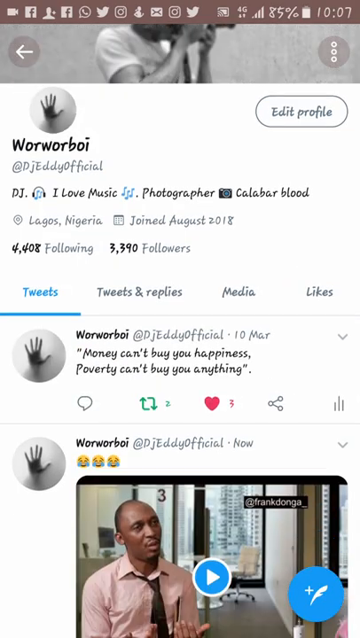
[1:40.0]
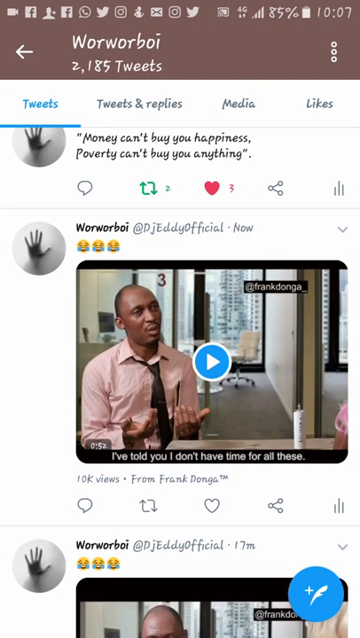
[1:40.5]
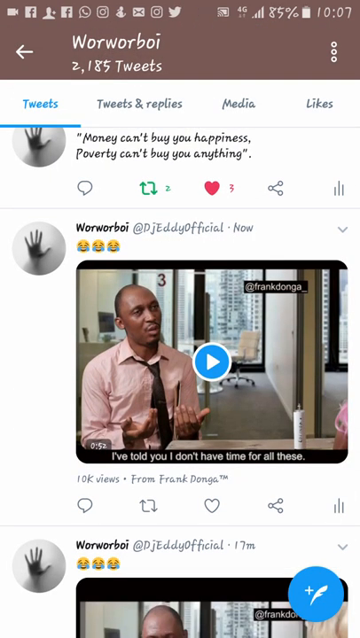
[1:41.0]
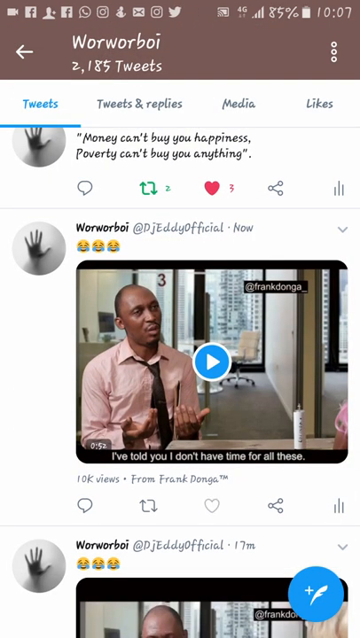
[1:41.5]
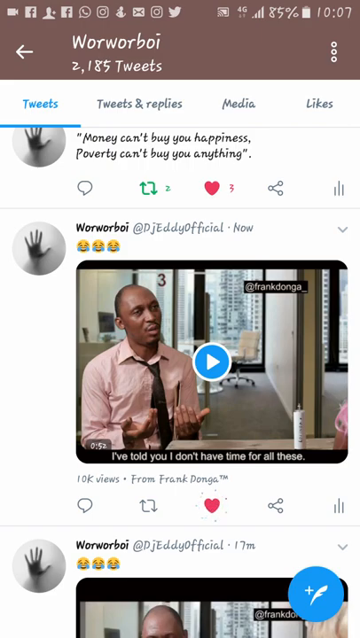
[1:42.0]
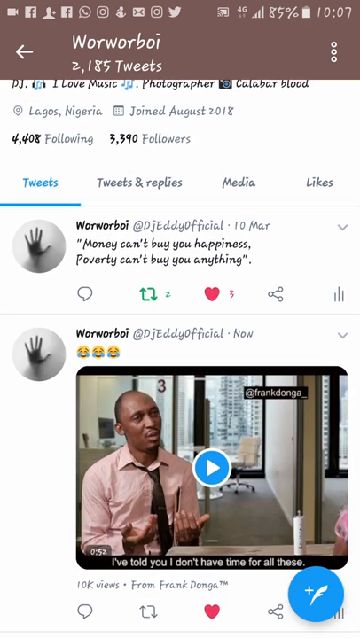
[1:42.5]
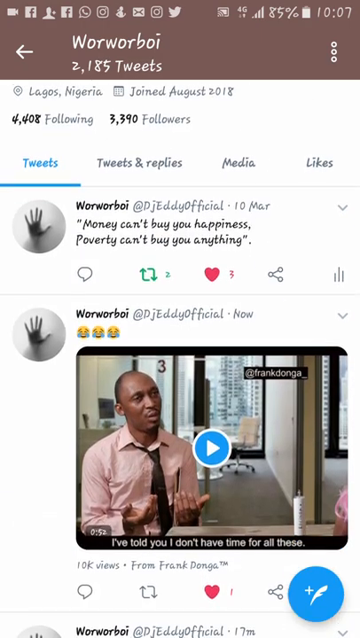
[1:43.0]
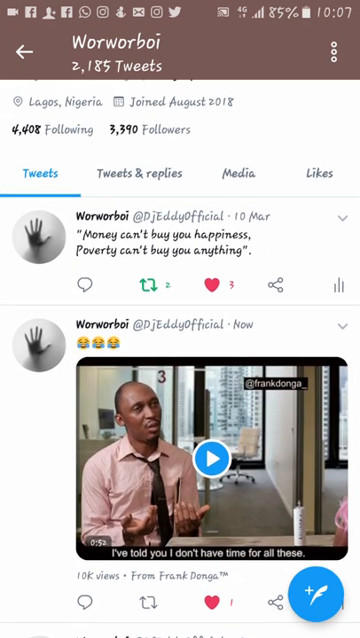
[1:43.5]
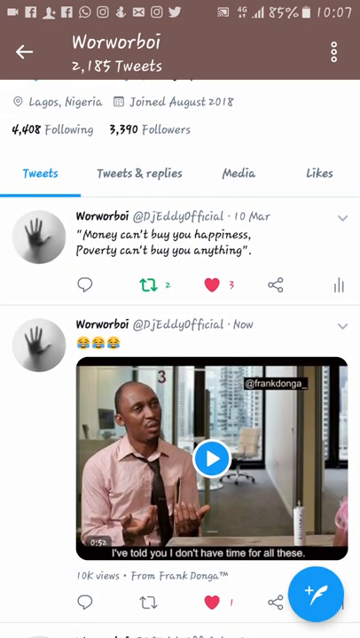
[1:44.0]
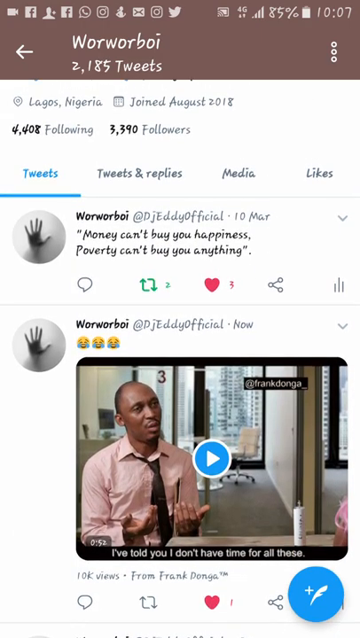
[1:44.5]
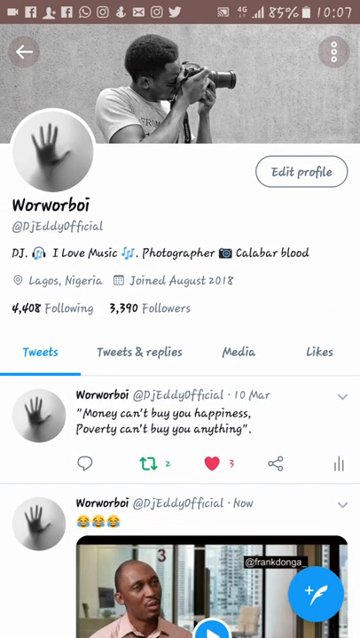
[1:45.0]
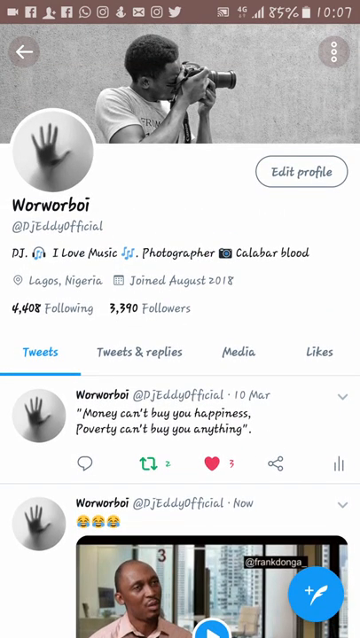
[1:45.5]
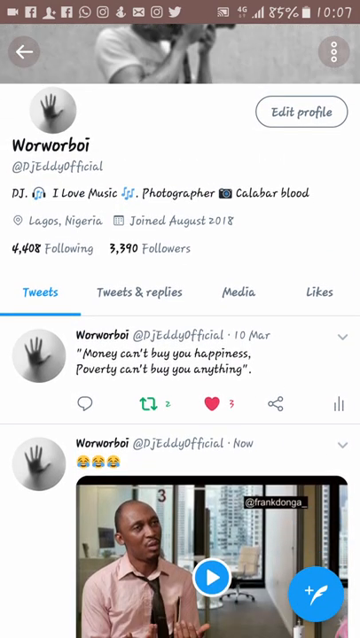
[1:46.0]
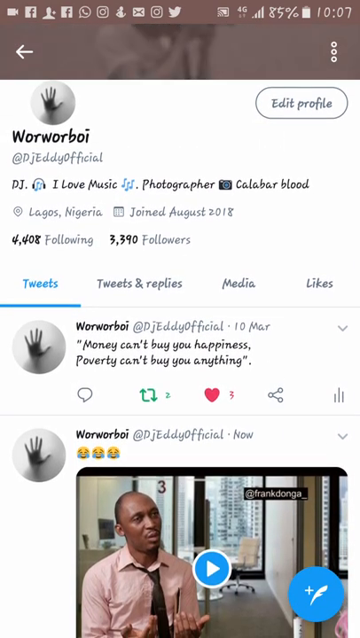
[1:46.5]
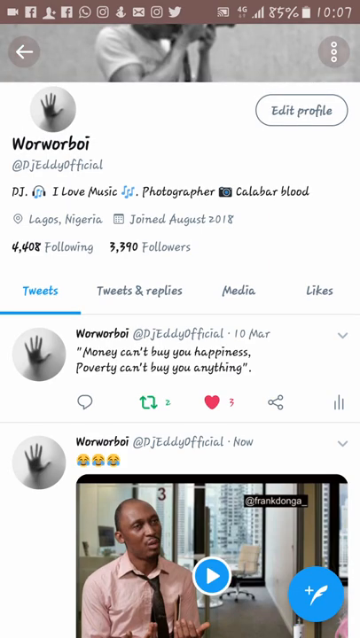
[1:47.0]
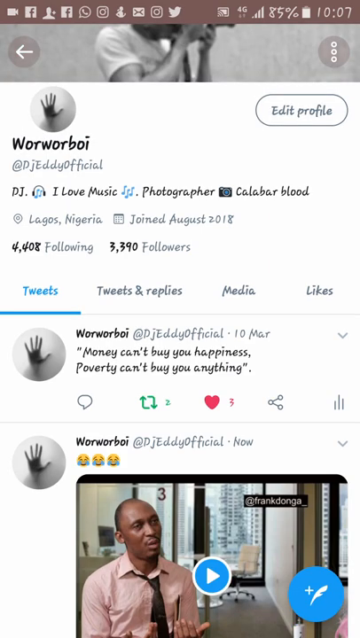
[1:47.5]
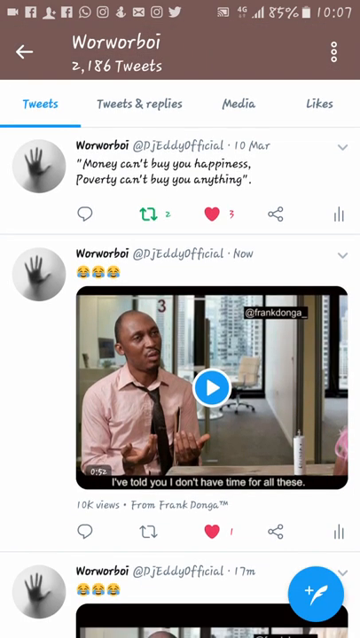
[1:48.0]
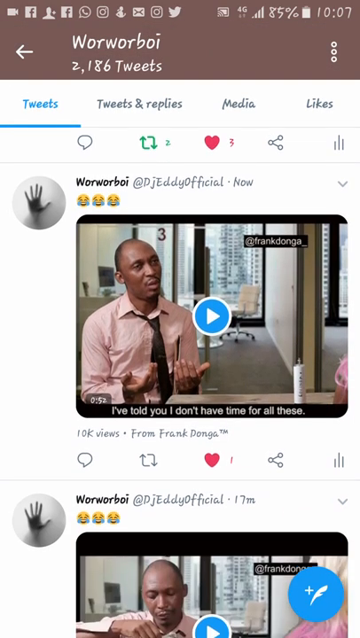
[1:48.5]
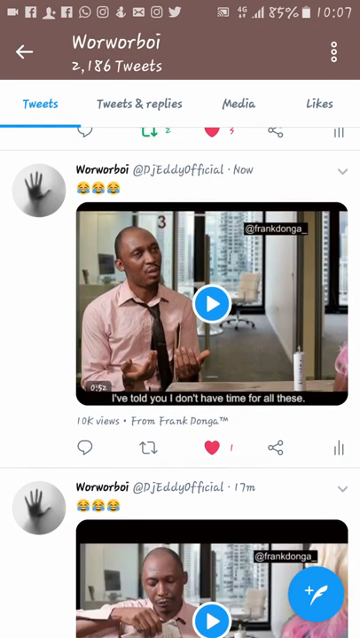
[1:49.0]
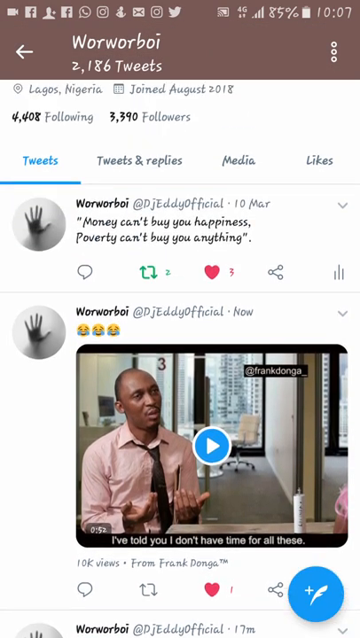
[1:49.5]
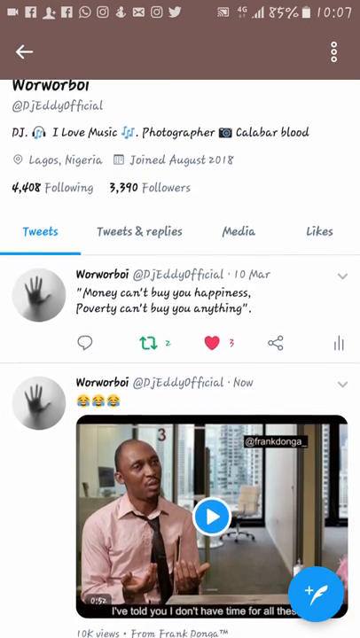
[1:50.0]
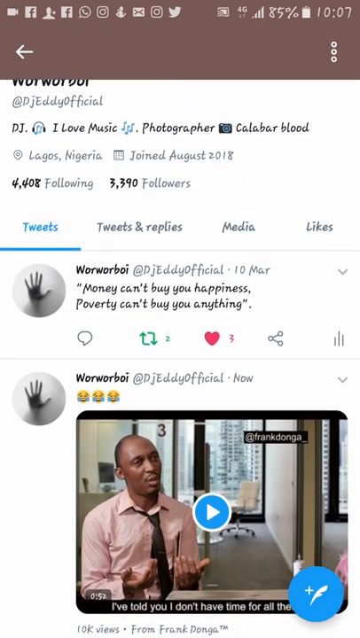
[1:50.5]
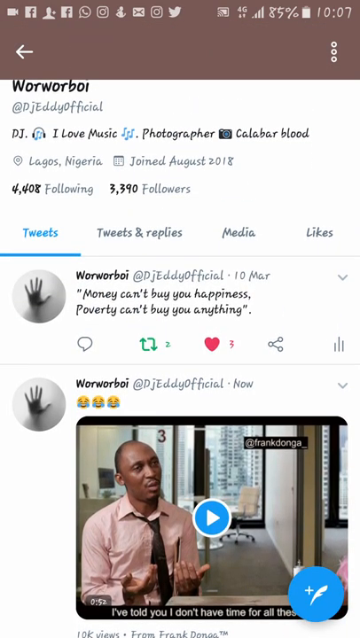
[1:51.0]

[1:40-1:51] The previously copied link is shown. The boy writes a caption on his post under his own thread of tweets, then puts in the link he copied before. He then presses to tweet, and the tweet is shown under his own page.